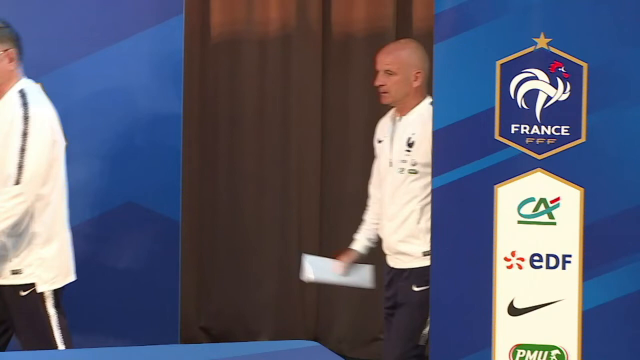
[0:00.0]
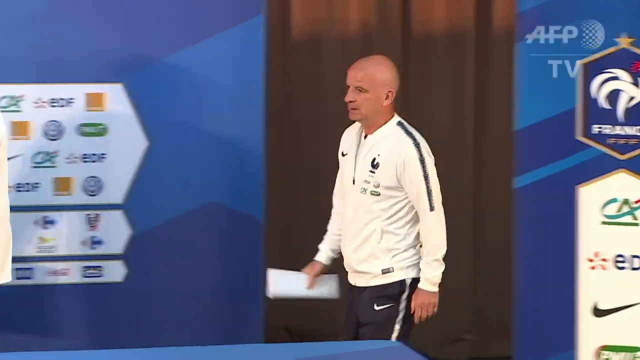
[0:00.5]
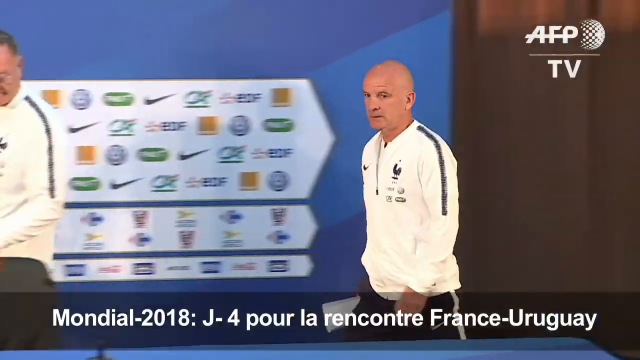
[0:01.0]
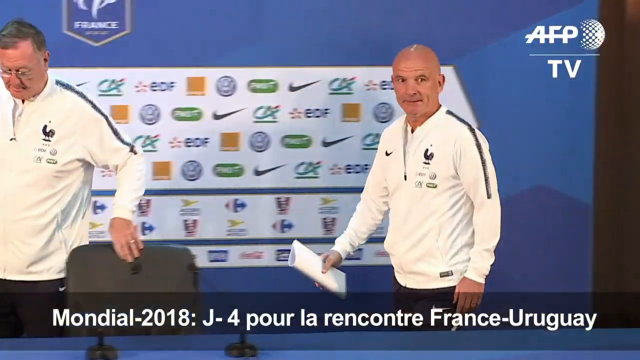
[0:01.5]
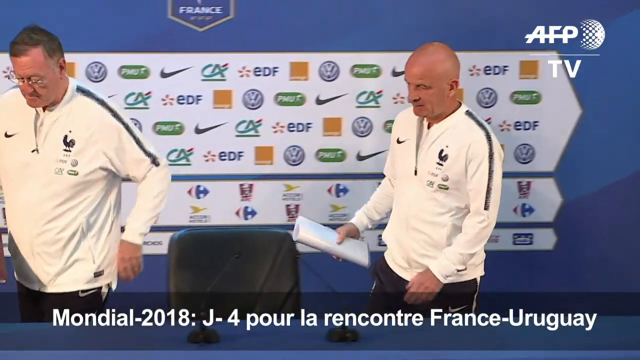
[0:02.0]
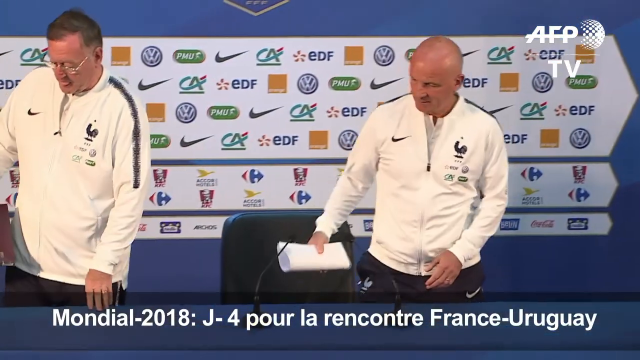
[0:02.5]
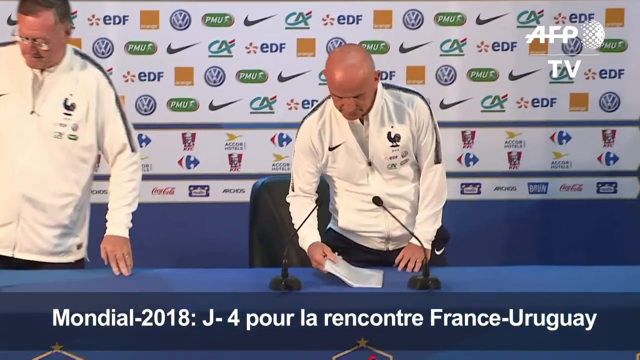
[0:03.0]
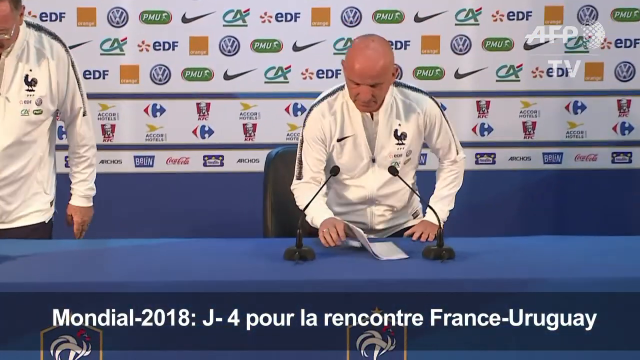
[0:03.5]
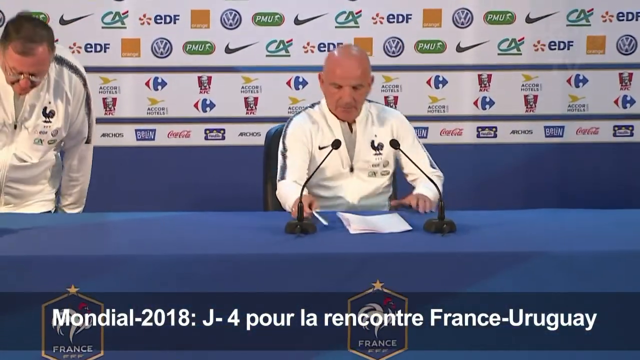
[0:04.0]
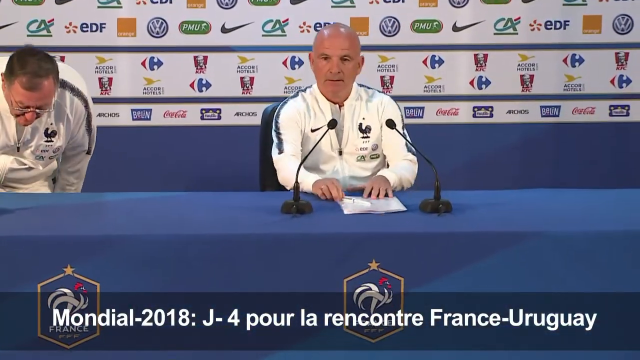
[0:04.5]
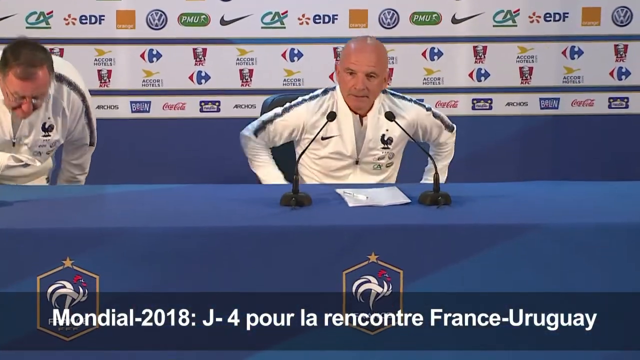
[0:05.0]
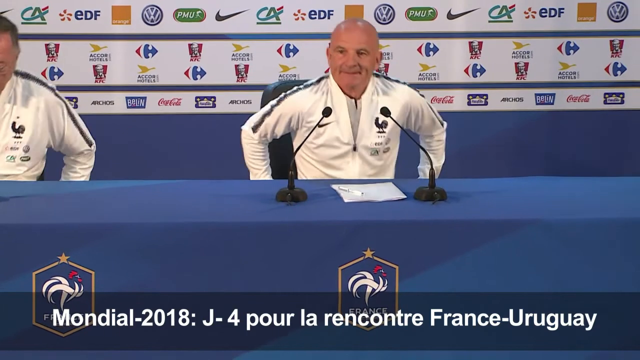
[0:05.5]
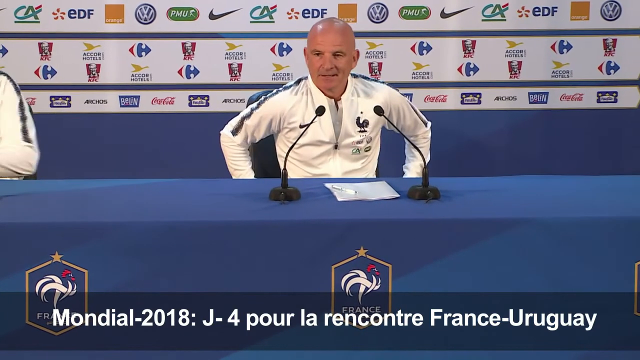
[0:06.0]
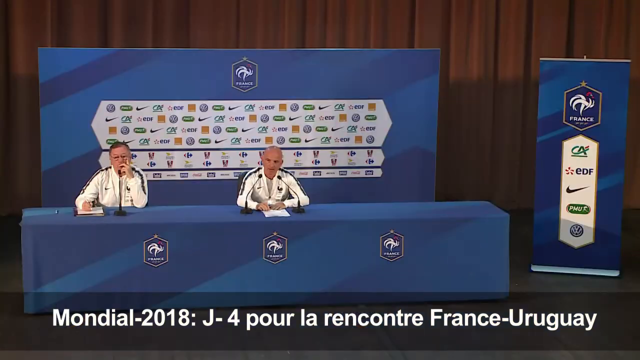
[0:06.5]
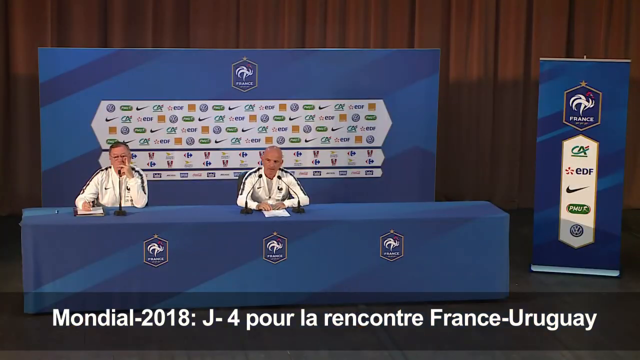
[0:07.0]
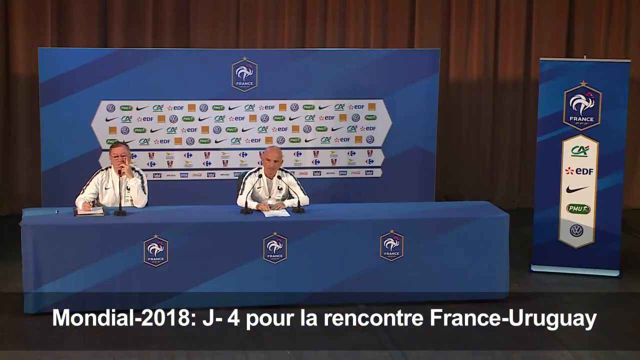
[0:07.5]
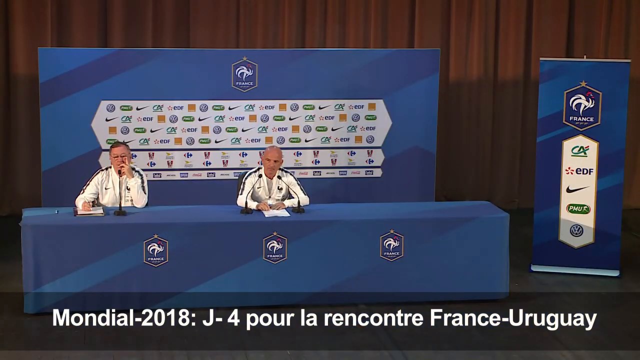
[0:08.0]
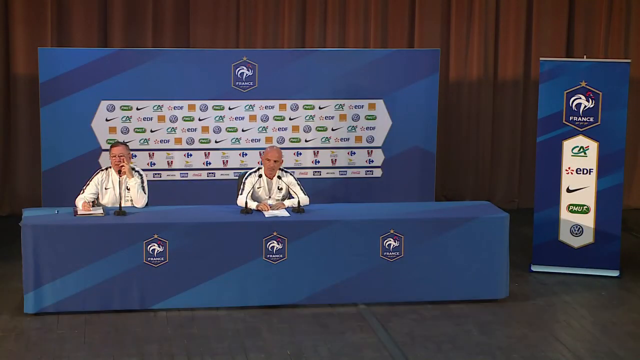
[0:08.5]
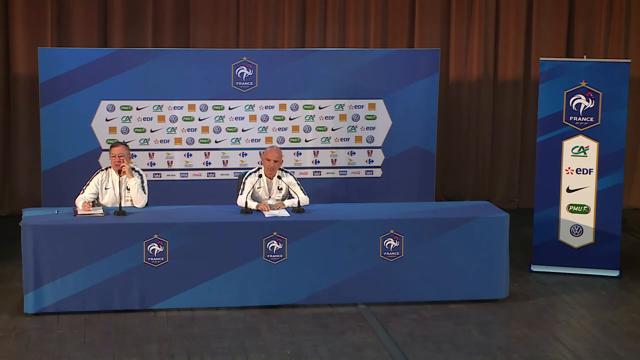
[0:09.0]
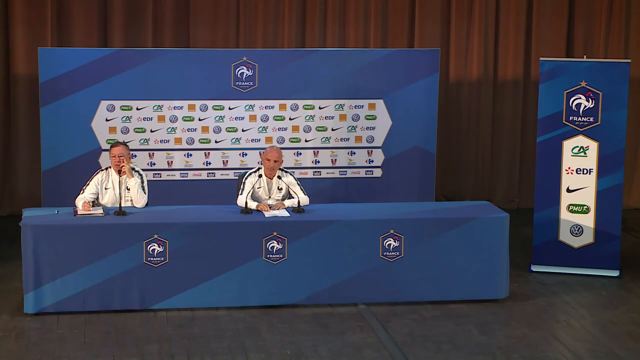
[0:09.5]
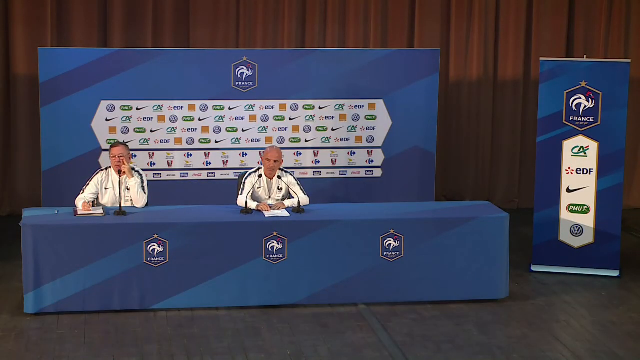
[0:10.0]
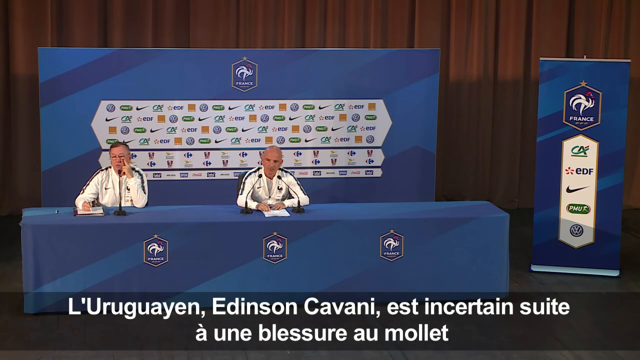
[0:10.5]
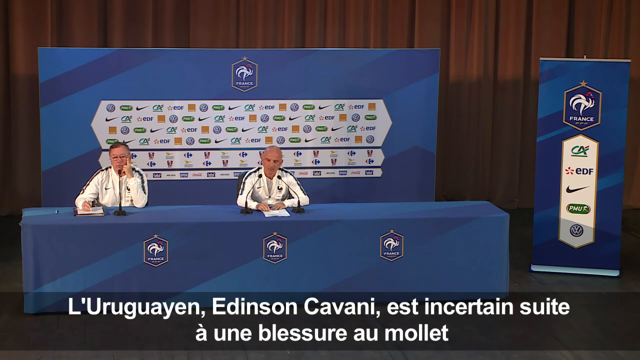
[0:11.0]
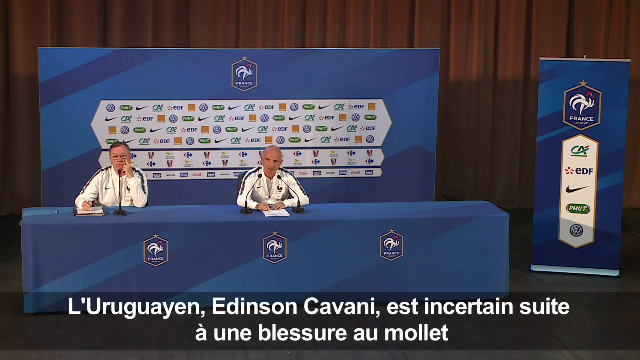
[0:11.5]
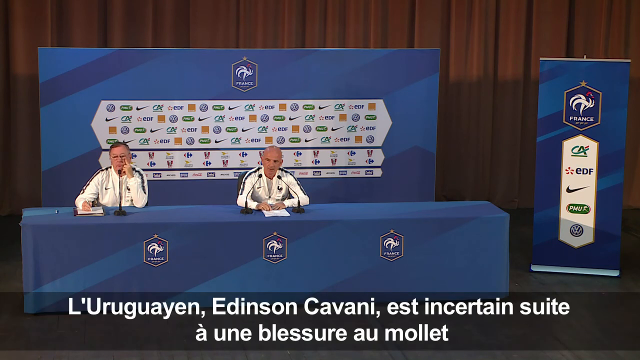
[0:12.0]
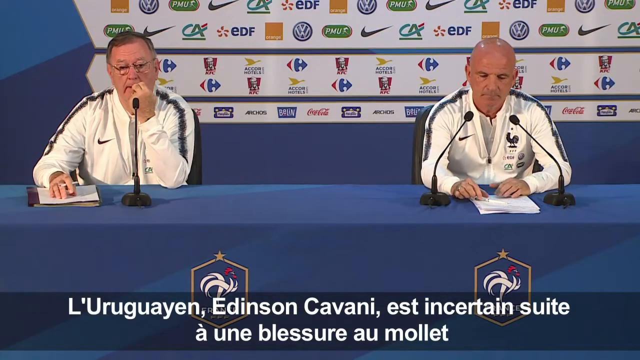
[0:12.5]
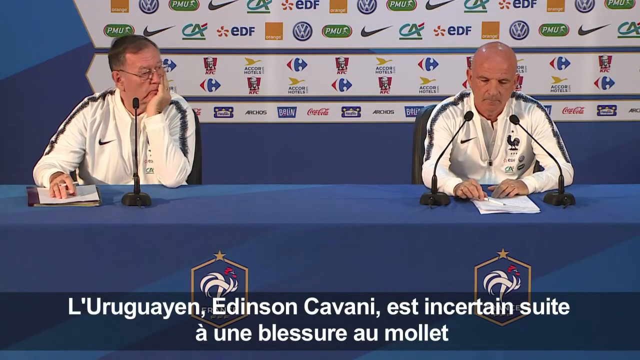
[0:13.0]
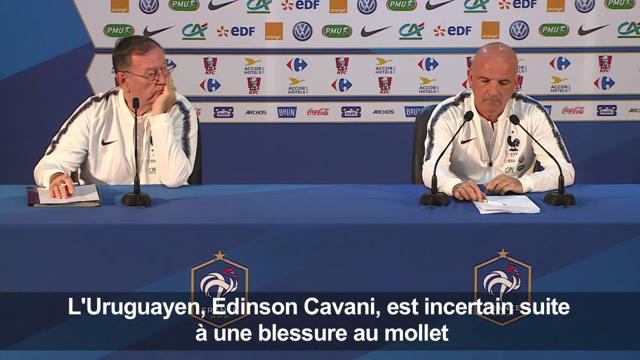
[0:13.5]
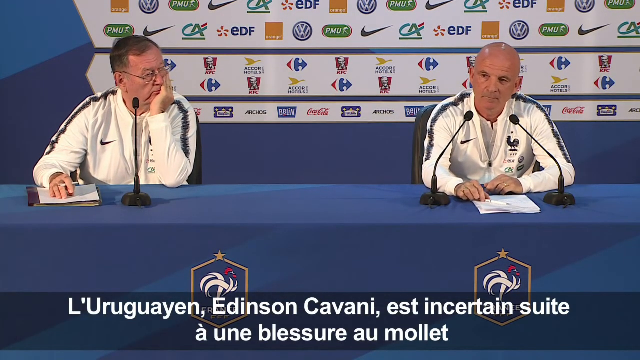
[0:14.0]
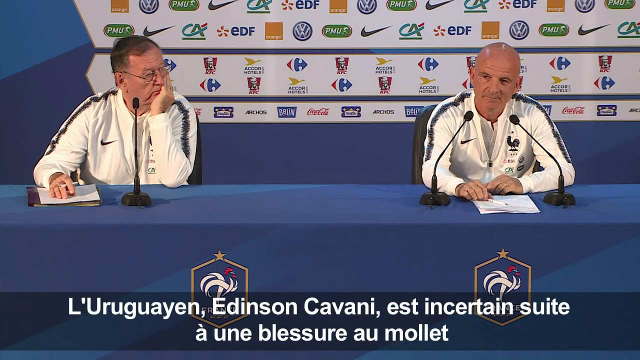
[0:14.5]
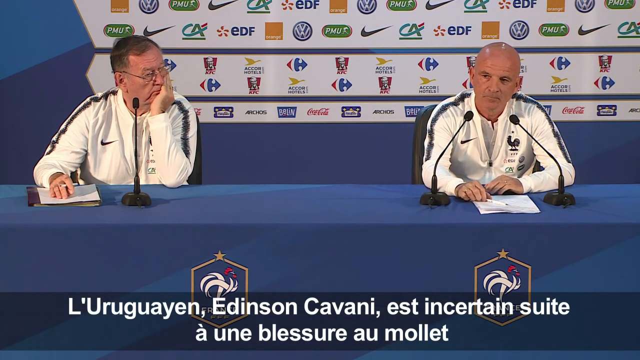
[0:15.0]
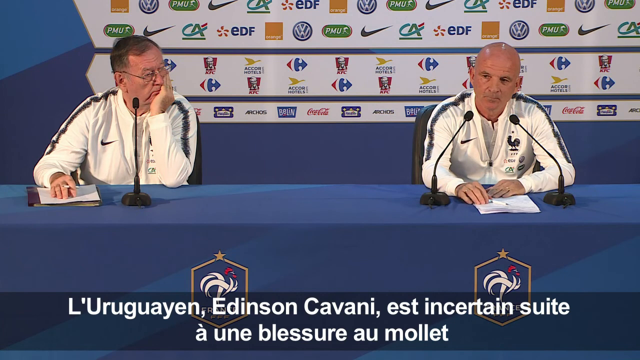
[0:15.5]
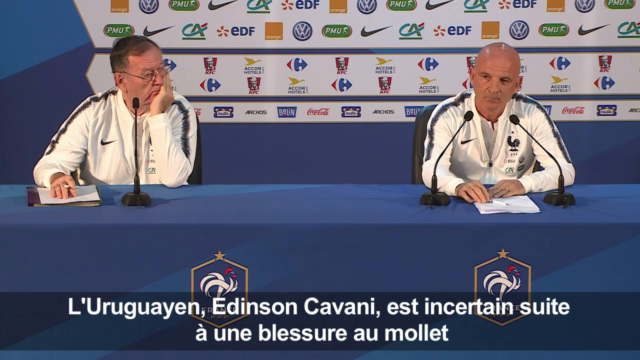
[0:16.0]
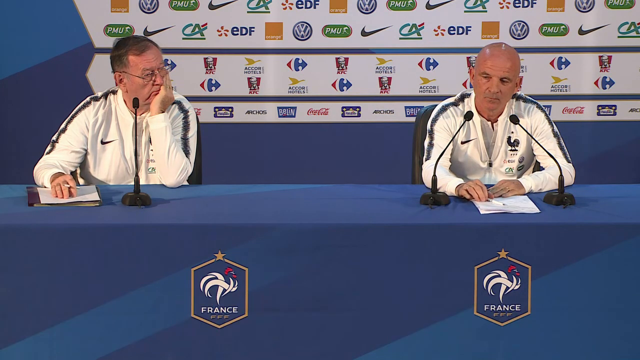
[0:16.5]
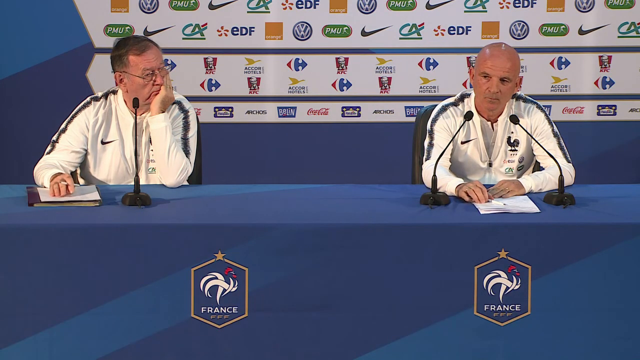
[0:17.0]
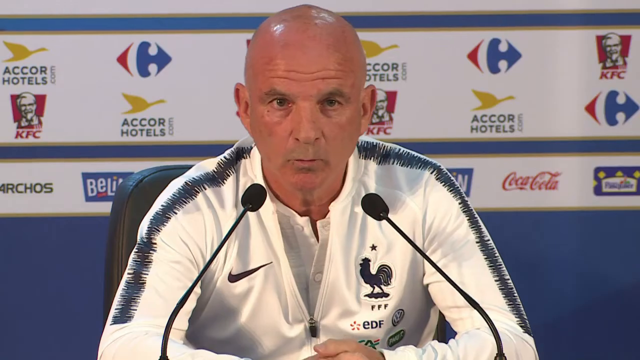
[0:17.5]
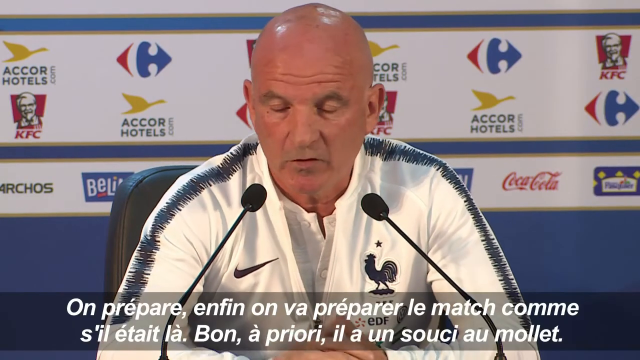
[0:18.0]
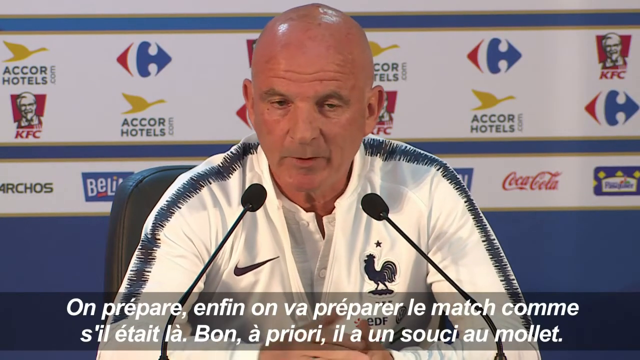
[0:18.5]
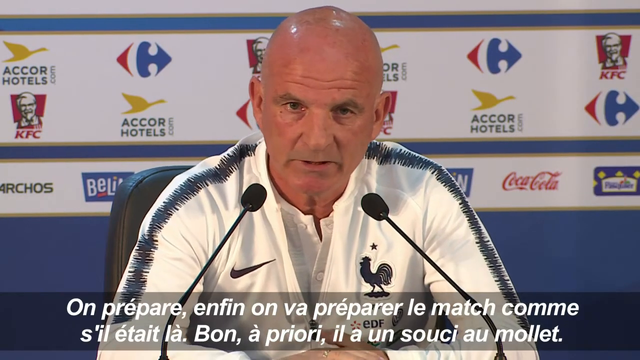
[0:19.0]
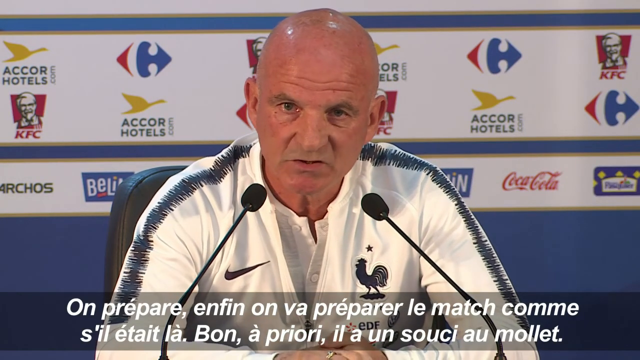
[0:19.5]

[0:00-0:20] The camera is focused on a man in a white top with a black stripe running down his shoulder, halfway down his left sleeve, as he walks from right to left into a room. He is white with a bald head and is seen from the knees up, holding a piece of white paper in his right hand. The camera moves left with him to show another man walking in front of him in a similar outfit; this man is older, with glasses and hair. The two men take seats behind a very long blue table, facing the camera. The bald man is on the right, with two microphones in front of him, and a blue backdrop behind him carries lots of advertising for companies, including Volkswagen and Nike. It appears to be a press conference. The table has a blue covering with logos on the front showing France and what appears to be a graphic of a cockerel drawn in white ribbons. White text along the bottom of the screen reads 'Mondial 2018: J-4 pour la rencontre France-Uruguay'. The camera settles as the man pulls in his chair. A cut to a wide shot shows the two men at the very long blue table facing the camera, the blue backdrop behind them, brown curtains hanging behind that across the whole width of the screen, and a separate blue pull-up display on the far right bearing the France logo, with a vertical section of more advertising logos underneath it. The text along the bottom of the screen updates as the shot cuts back to the two men close up at the table. They appear to be listening to someone, and the man on the right is looking slightly to the left. The shot then cuts to a close-up of the bald man as he speaks into the microphones.